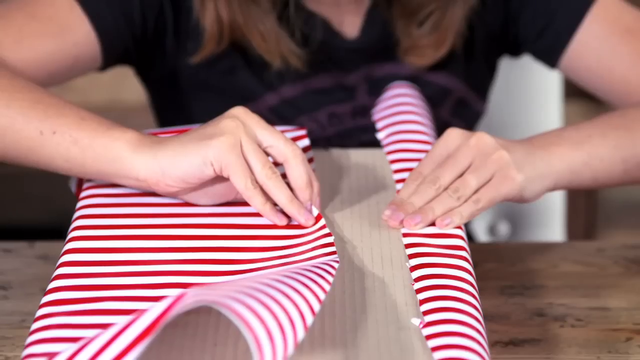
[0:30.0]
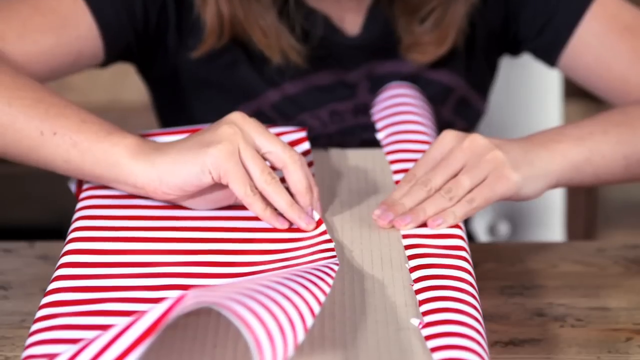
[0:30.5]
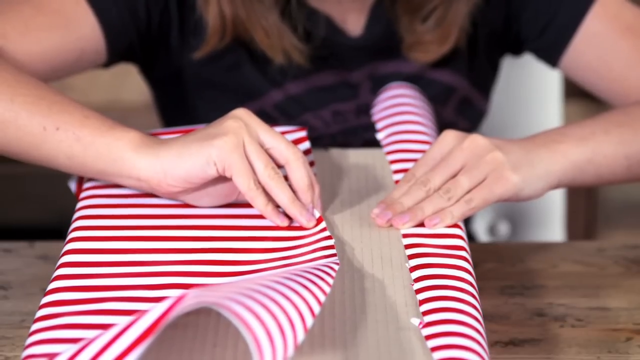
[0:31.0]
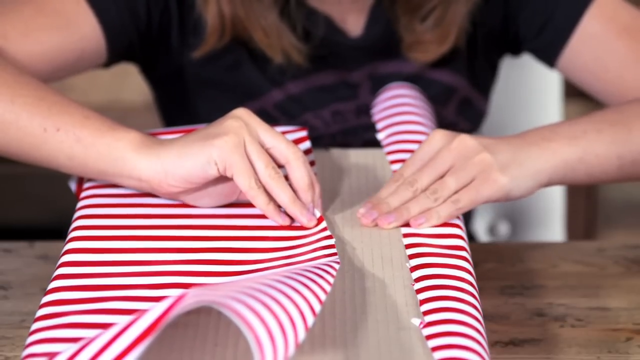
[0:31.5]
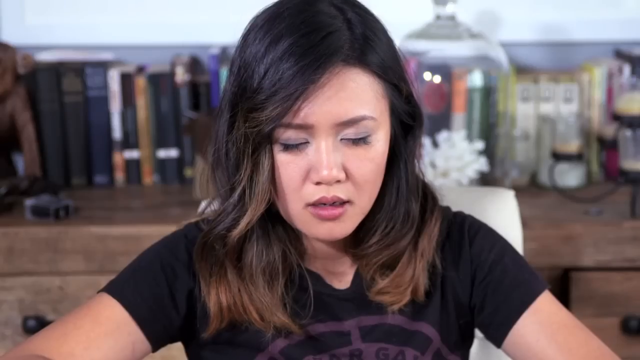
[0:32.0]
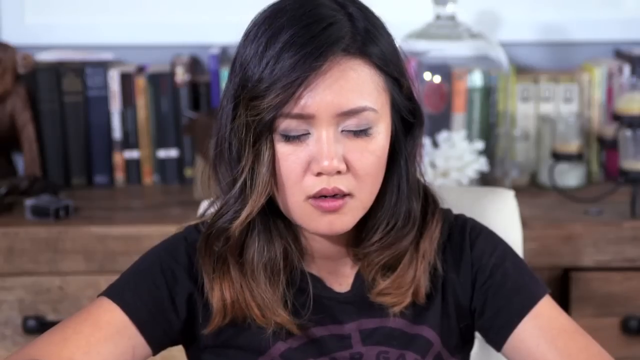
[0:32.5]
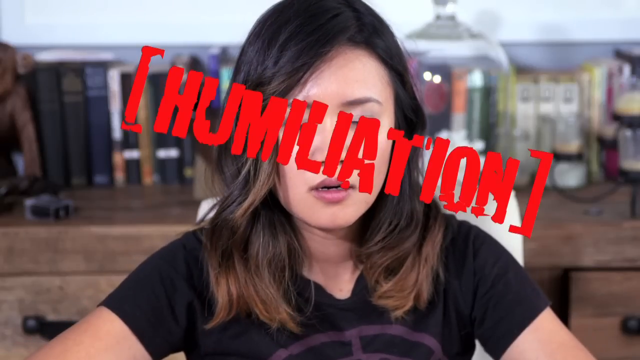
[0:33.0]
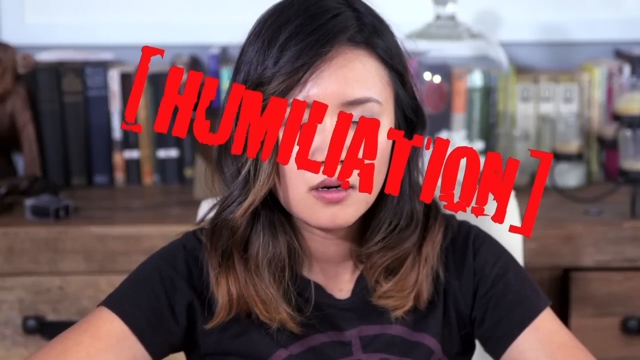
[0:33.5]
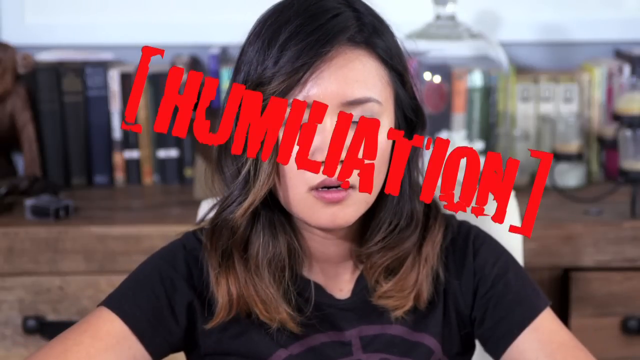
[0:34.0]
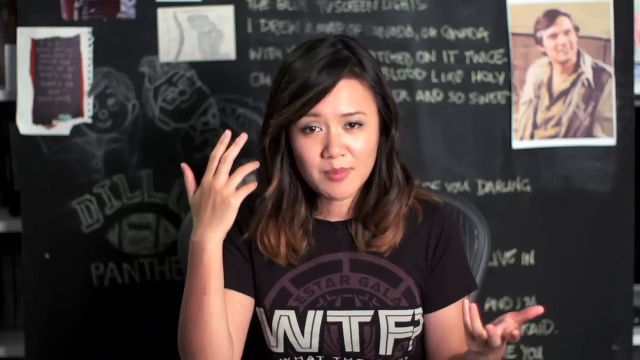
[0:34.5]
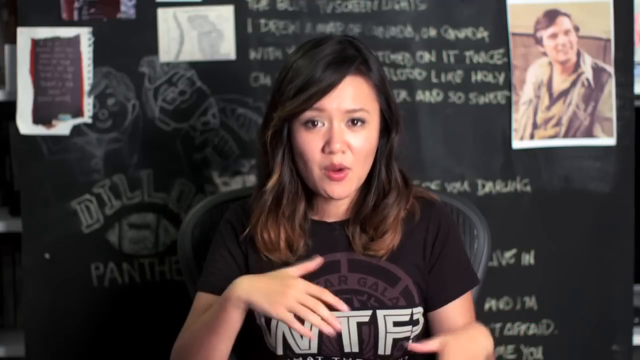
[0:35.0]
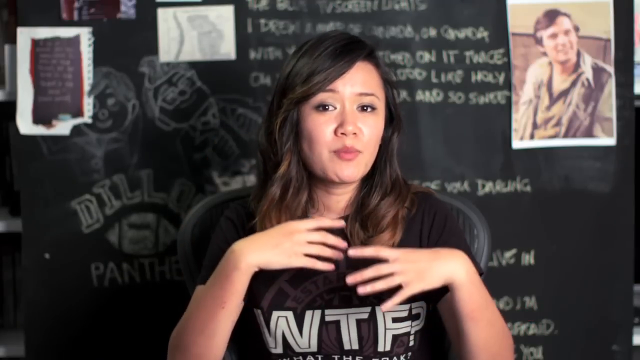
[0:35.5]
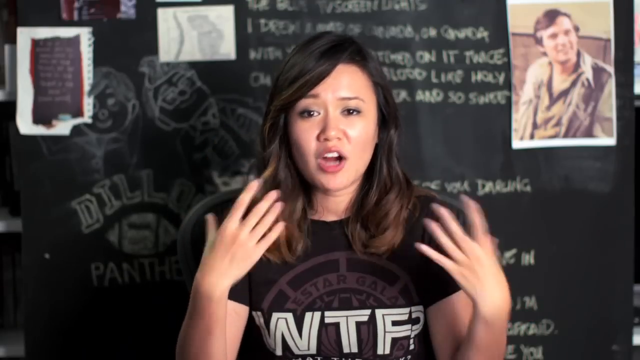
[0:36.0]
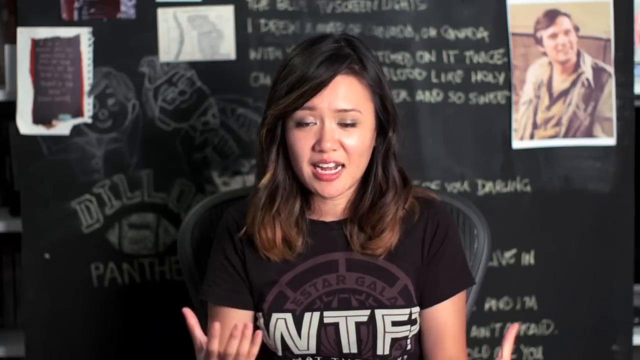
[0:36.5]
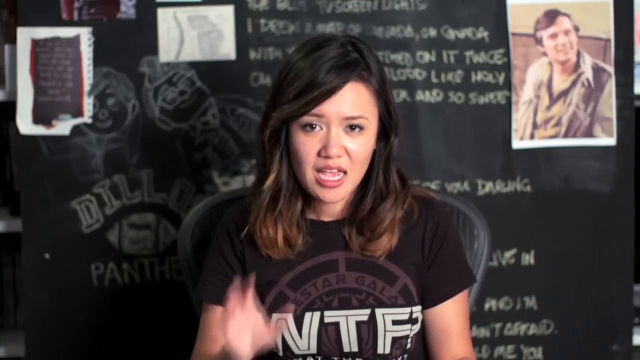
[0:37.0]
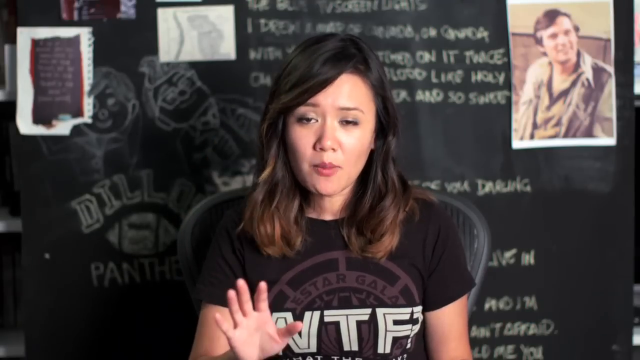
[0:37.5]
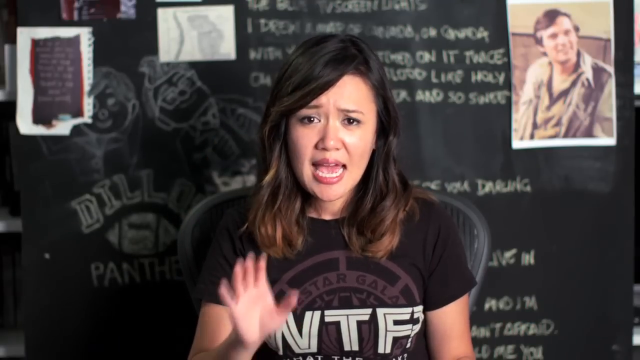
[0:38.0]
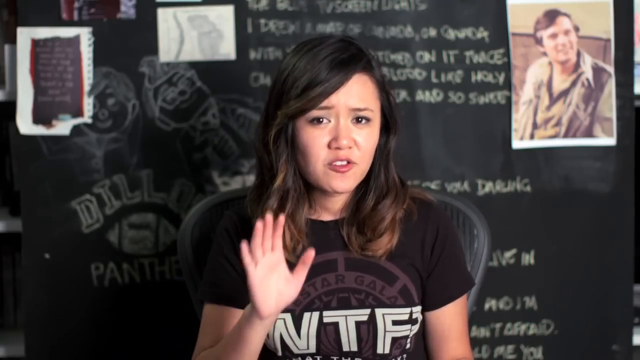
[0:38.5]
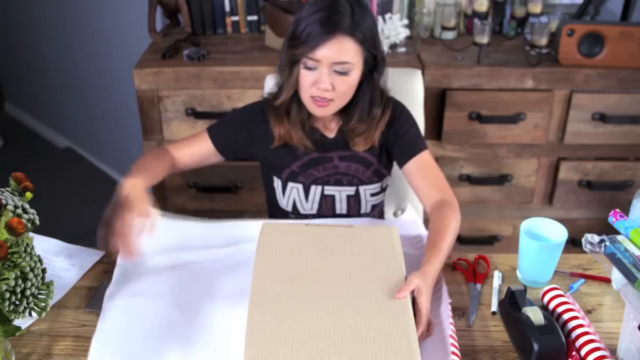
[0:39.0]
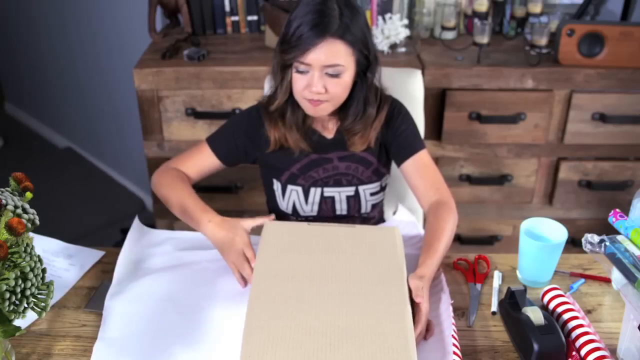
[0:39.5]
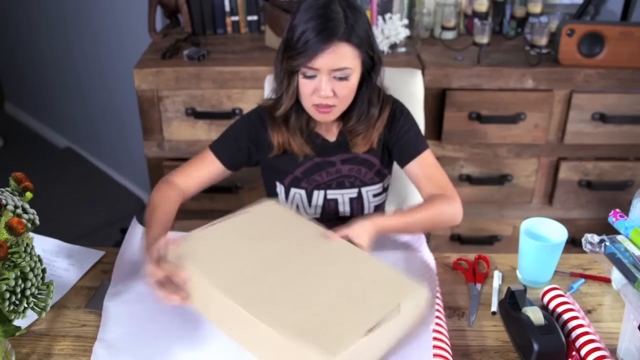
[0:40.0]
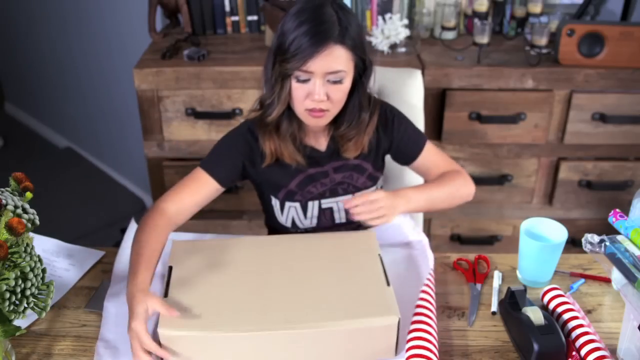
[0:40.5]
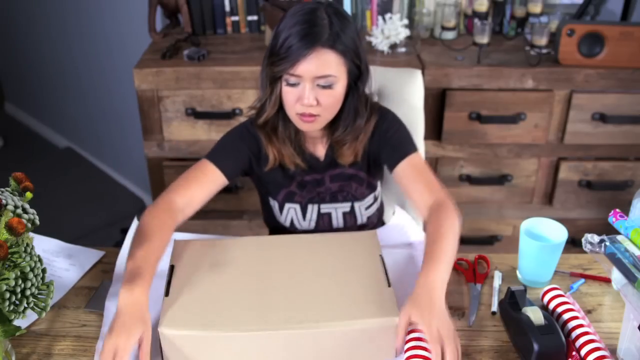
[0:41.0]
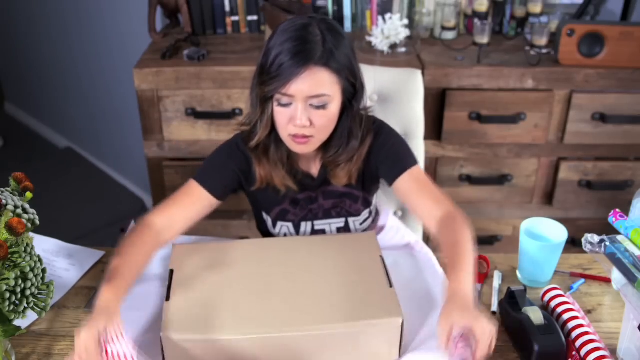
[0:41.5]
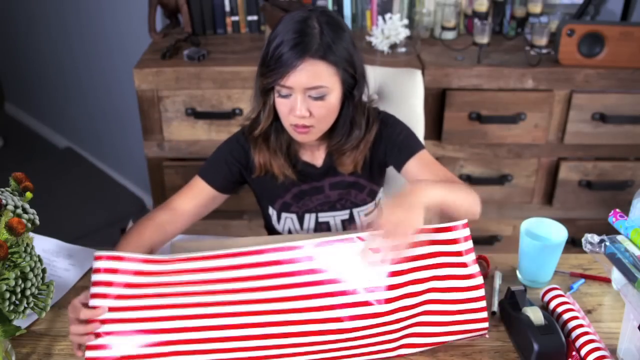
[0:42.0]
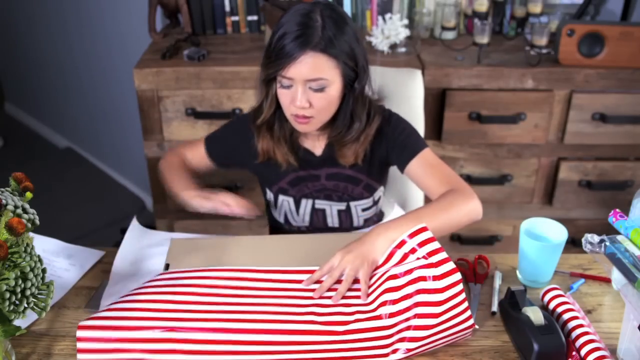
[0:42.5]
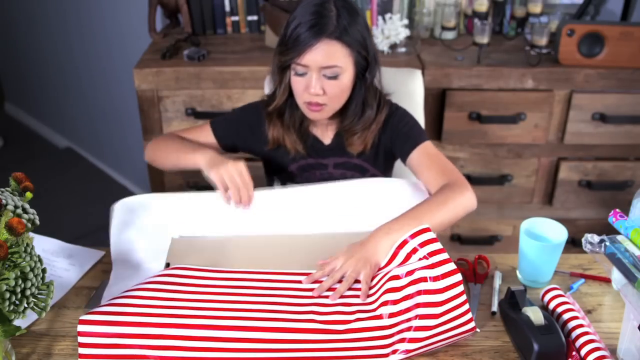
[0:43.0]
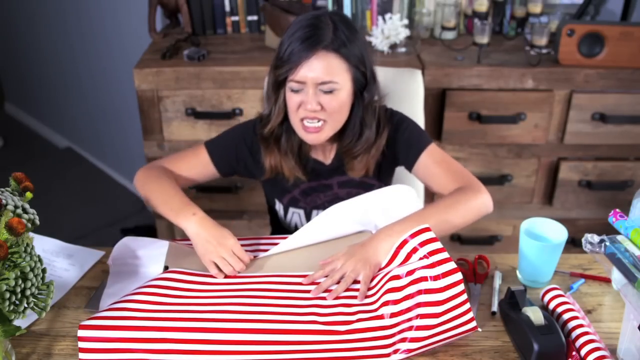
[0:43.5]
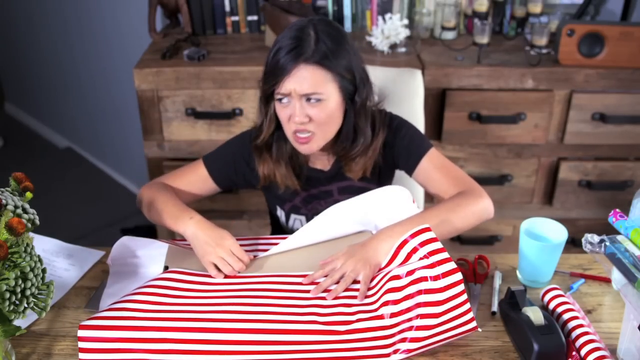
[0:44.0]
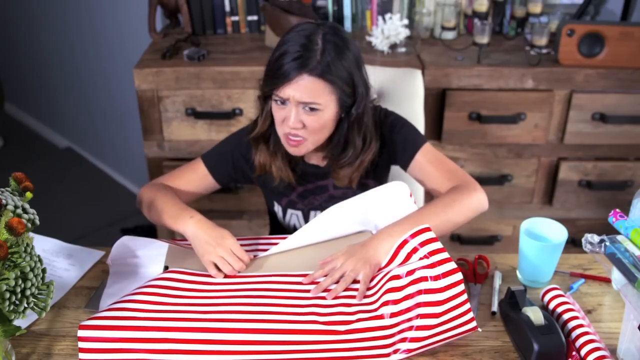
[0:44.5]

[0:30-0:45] Apparently the wrapping paper is too short and she sighs, with a word written in red above it that passes too quickly to read. She talks again, then turns the box the other way, but the paper is still too short to wrap it and the gap remains. "humiliation" appears in red above her face, and she talks again, using her hands a lot. She turns the box another way and it is still too short; she appears to be getting frustrated. A sort of blue cup or glass is on the right-hand side. Her t-shirt is black with "WTF?" in white, and something brown that cannot be made out is behind her. She kind of sighs, and "humiliation" appears in red above her face again. A pair of scissors with red handles and some tape are next to the wrapping paper. The same pattern keeps repeating: she turns the box and it still doesn't fit.